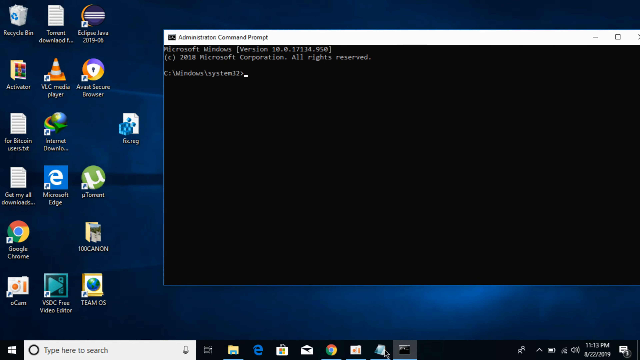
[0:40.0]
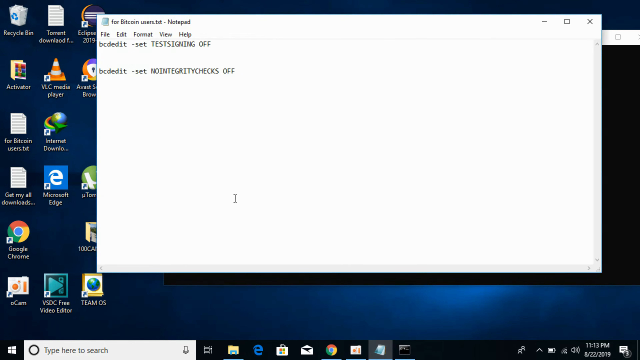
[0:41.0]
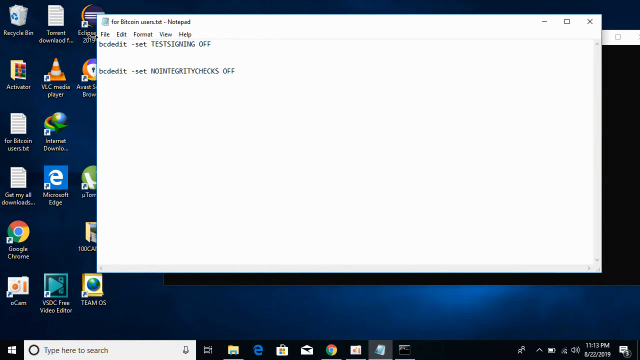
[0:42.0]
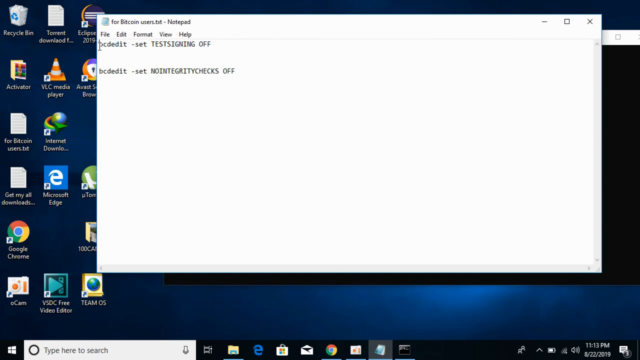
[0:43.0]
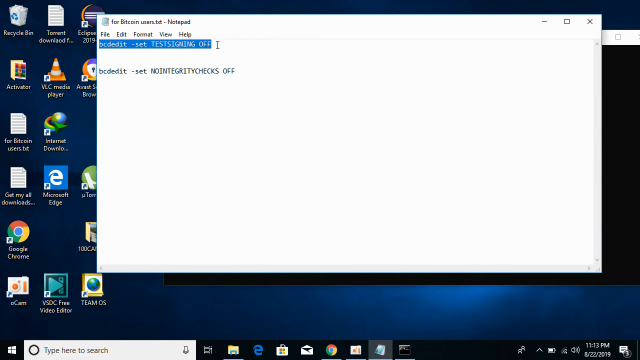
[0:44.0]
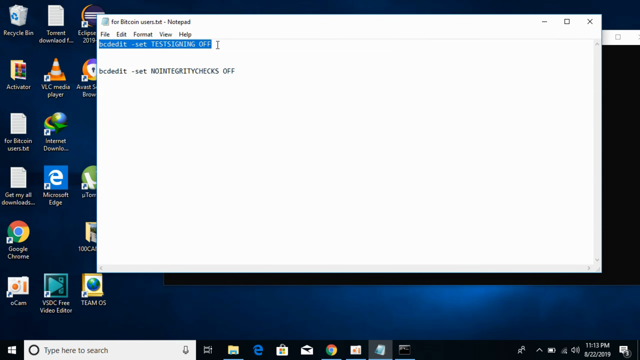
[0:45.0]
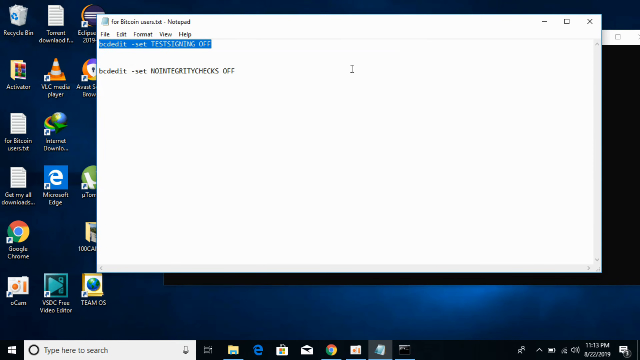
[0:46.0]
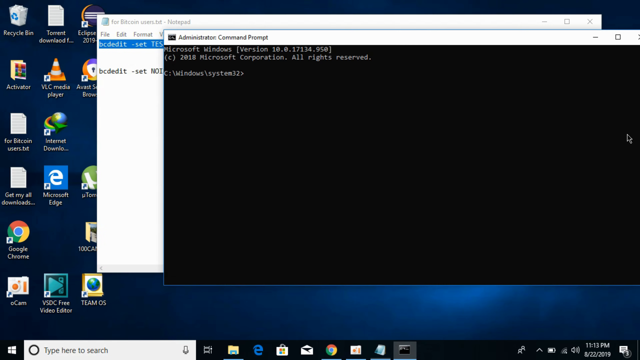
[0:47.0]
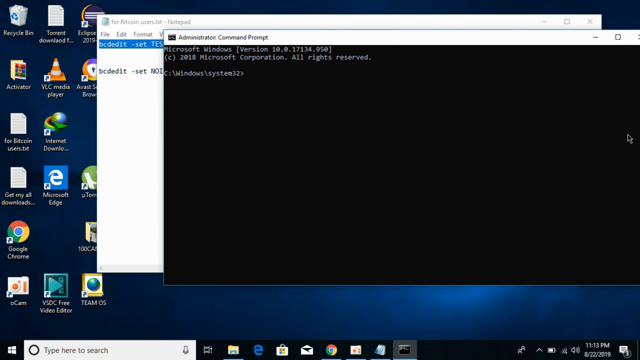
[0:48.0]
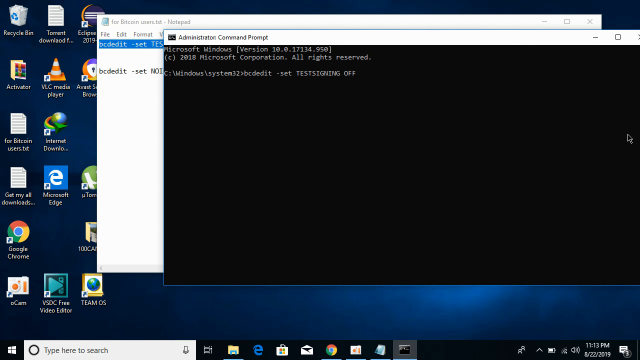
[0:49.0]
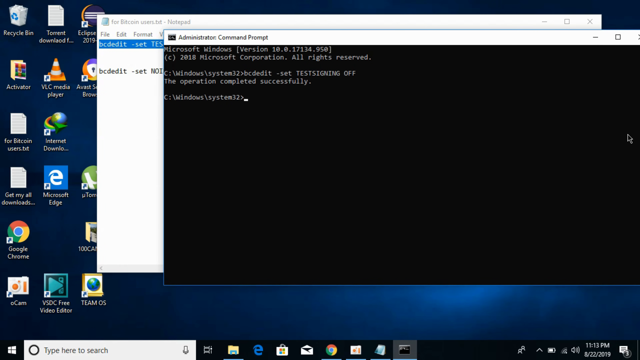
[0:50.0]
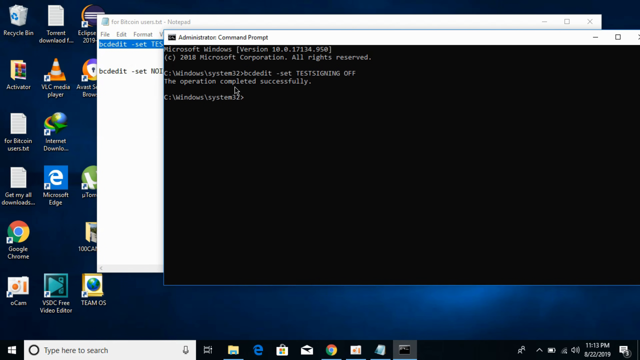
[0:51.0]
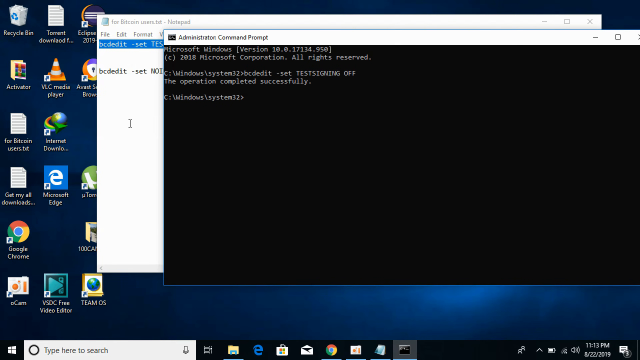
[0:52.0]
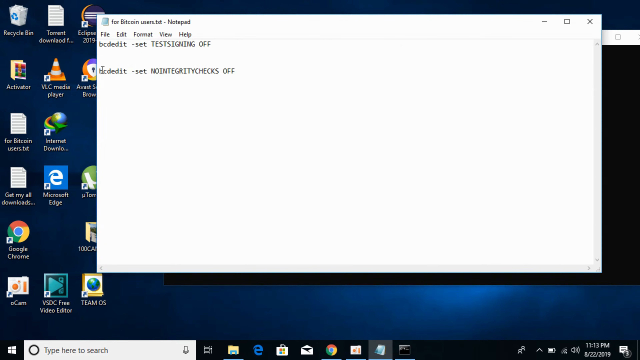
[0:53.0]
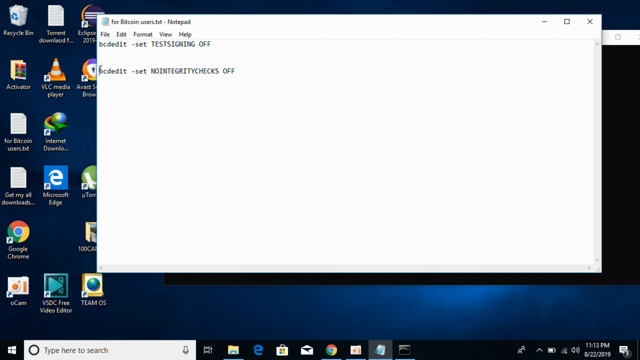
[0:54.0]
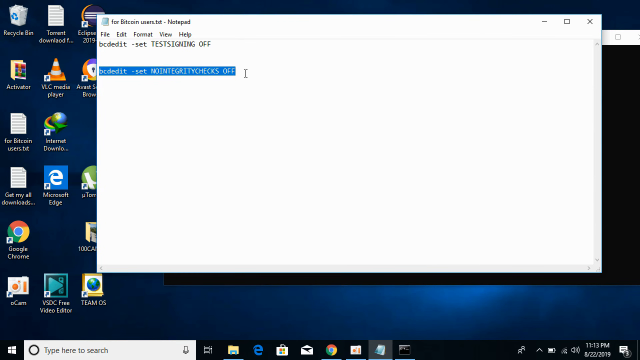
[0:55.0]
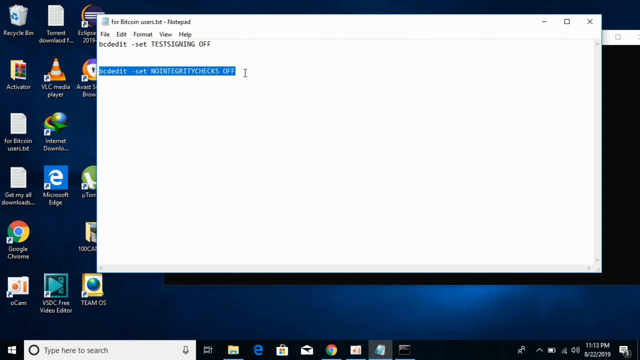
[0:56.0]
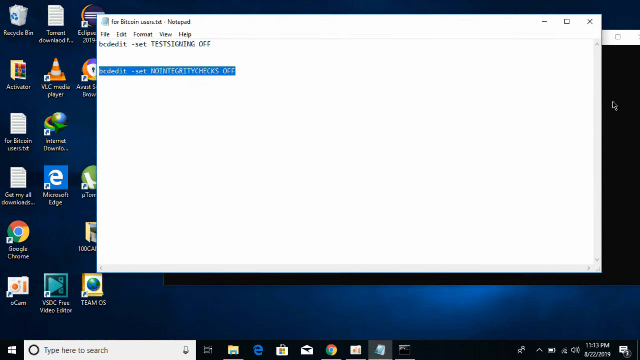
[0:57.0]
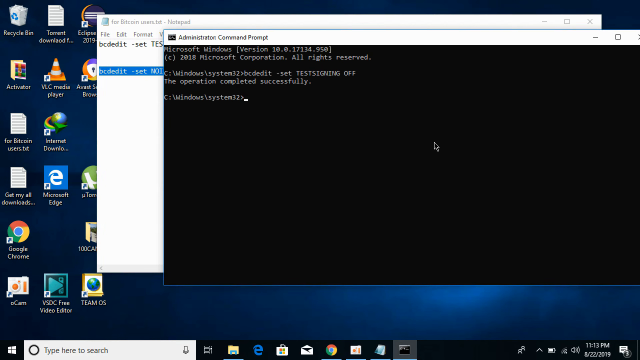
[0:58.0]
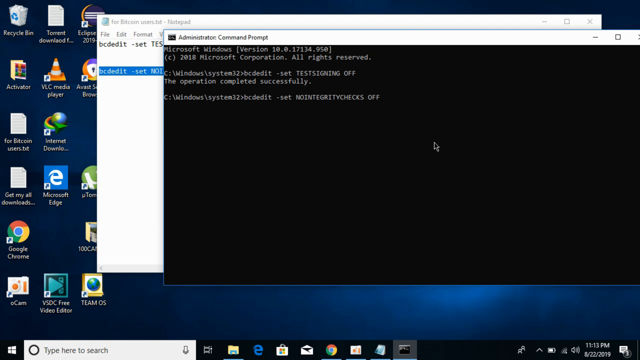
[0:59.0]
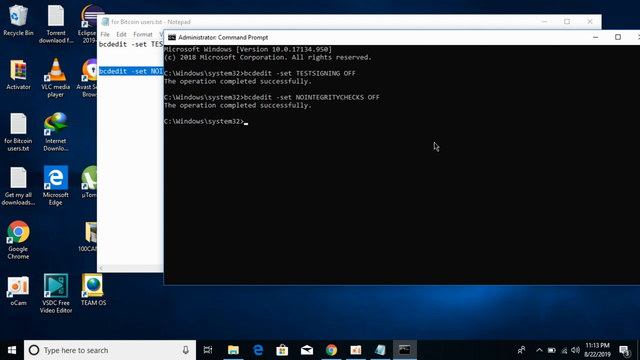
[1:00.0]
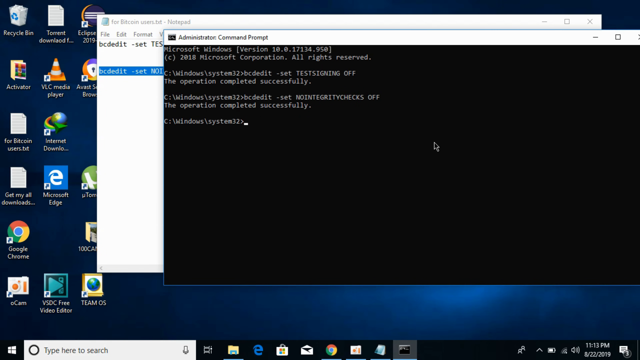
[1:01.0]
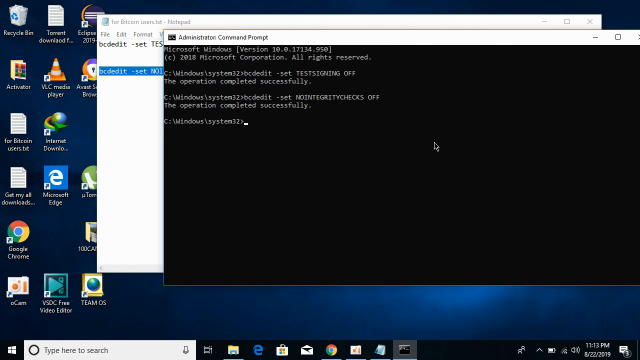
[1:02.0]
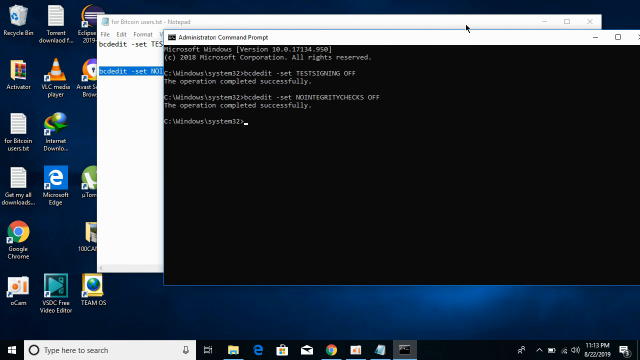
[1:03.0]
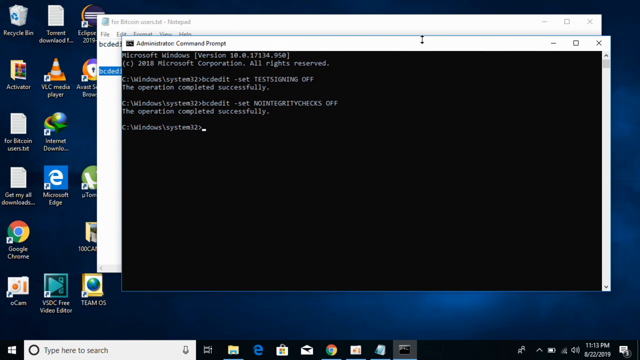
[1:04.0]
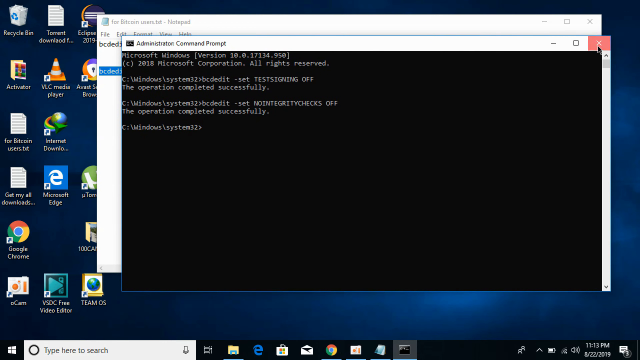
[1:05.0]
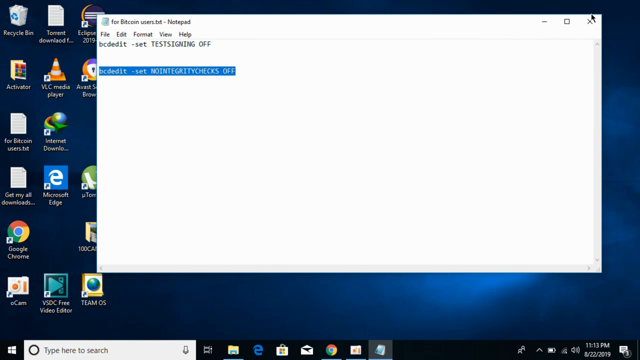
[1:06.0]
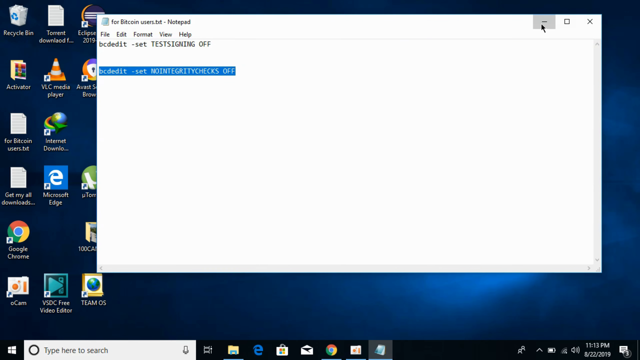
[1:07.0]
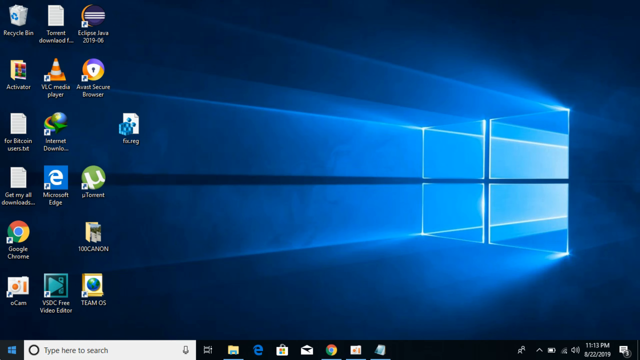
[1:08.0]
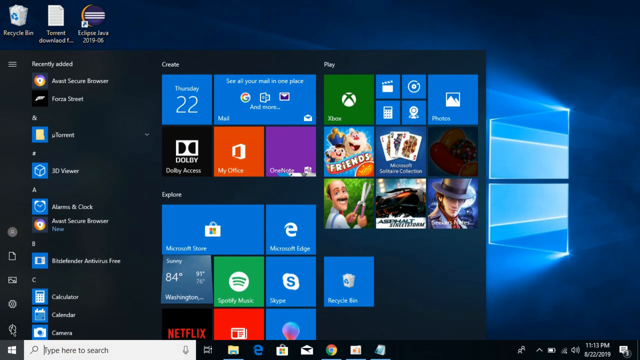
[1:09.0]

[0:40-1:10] A text file is now open, with the filename "forbitcoinusers.txt"; the file is on the desktop and was apparently opened from its desktop icon, though the opening is not shown. The file contains commands using "bcdedit-set." The user copies the first command, which sets the test signing variable to off, goes back to the Command Prompt window, right-clicks to paste it, and runs it; the output reads "the operation completed successfully." Returning to Notepad, the user selects the next command, another bcdedit command, this one setting no integrity checks to off, then pastes it into the terminal window and runs it.